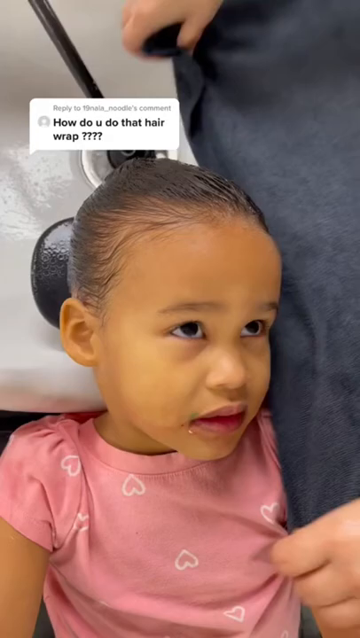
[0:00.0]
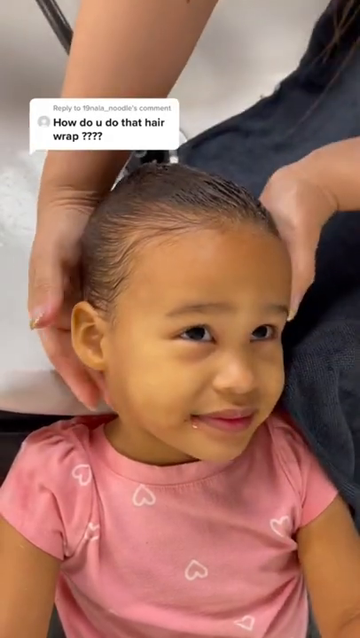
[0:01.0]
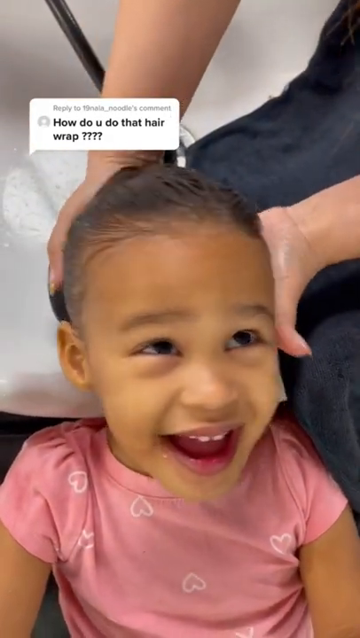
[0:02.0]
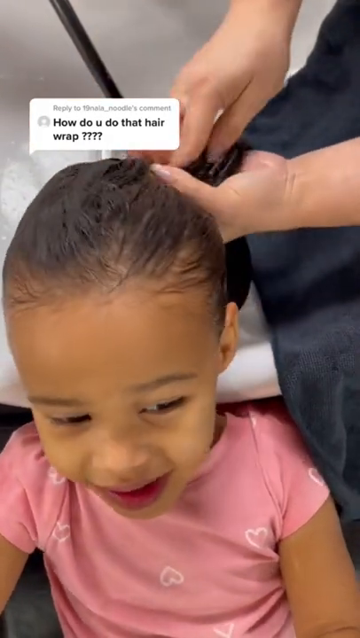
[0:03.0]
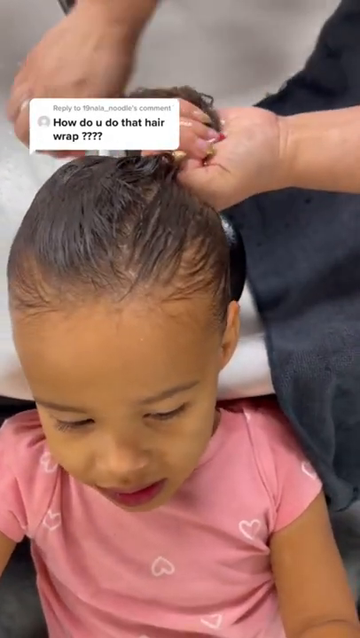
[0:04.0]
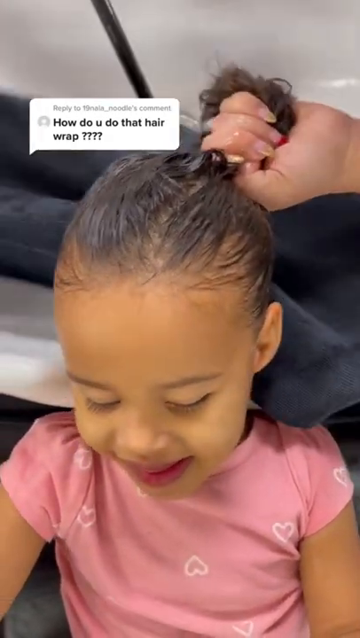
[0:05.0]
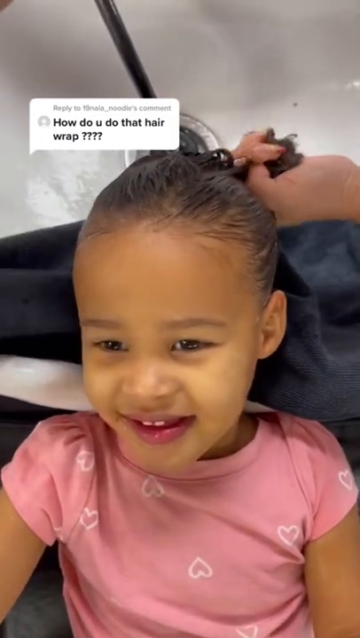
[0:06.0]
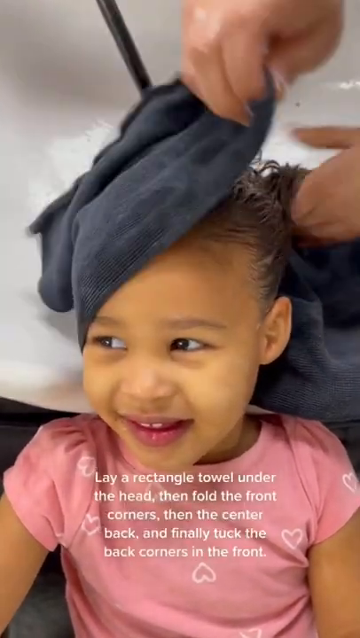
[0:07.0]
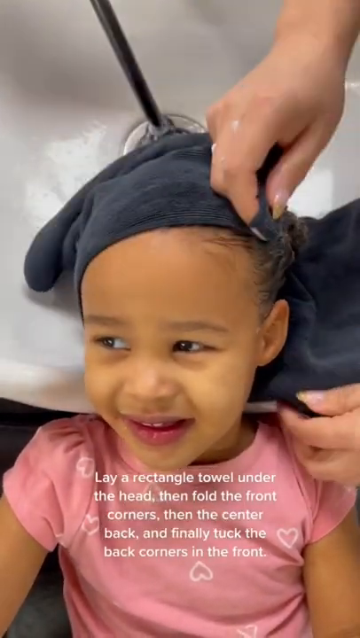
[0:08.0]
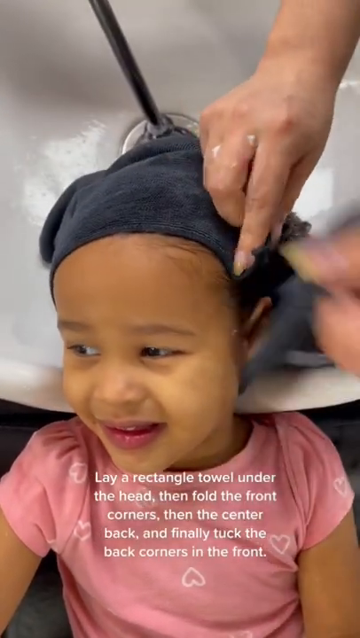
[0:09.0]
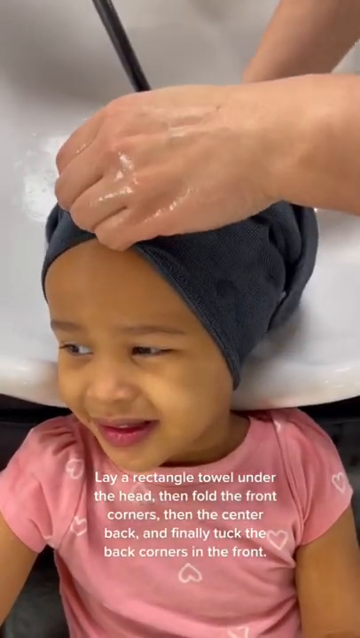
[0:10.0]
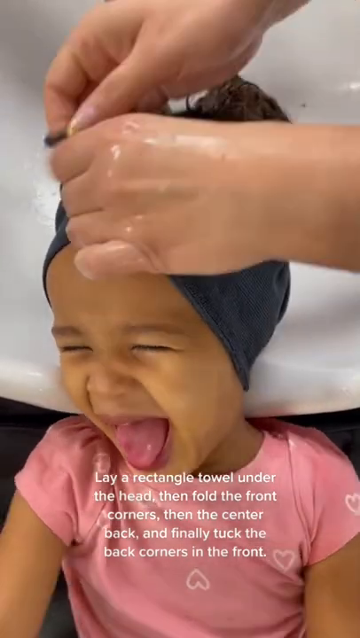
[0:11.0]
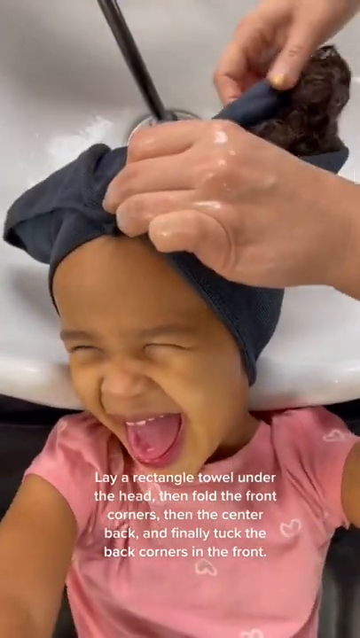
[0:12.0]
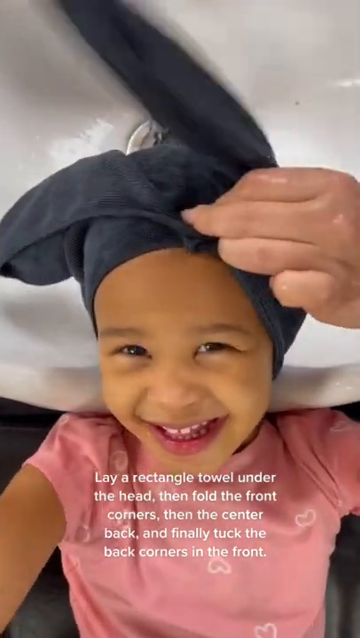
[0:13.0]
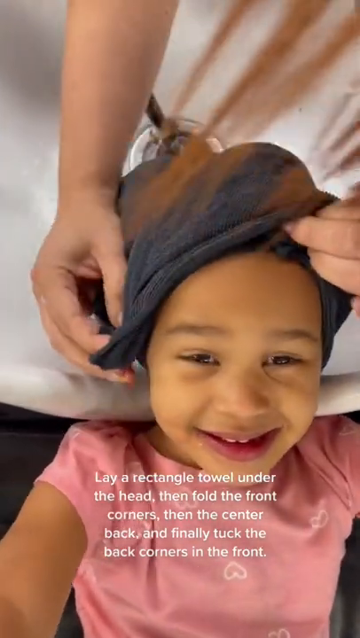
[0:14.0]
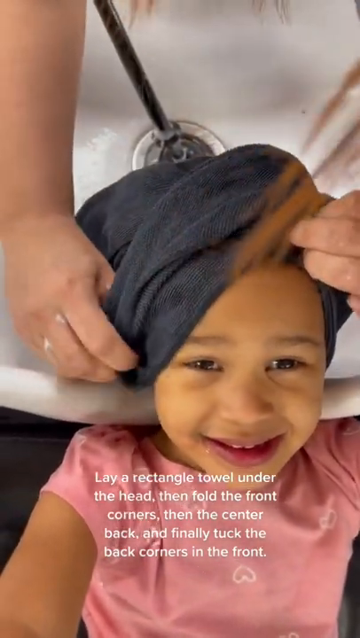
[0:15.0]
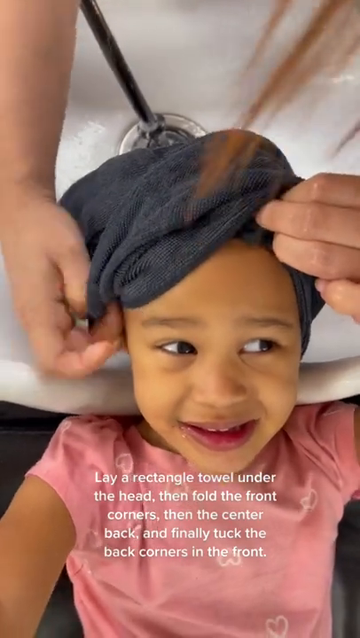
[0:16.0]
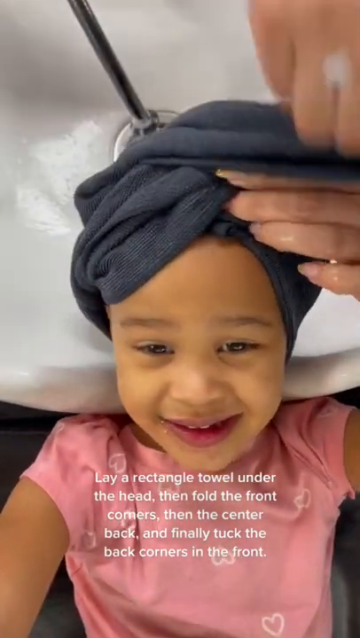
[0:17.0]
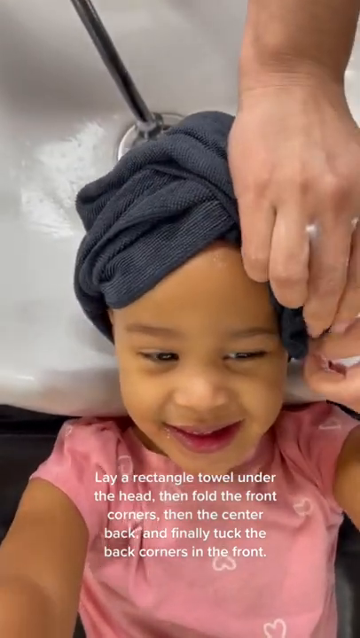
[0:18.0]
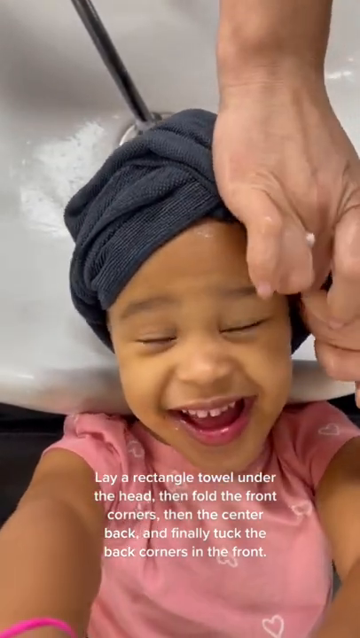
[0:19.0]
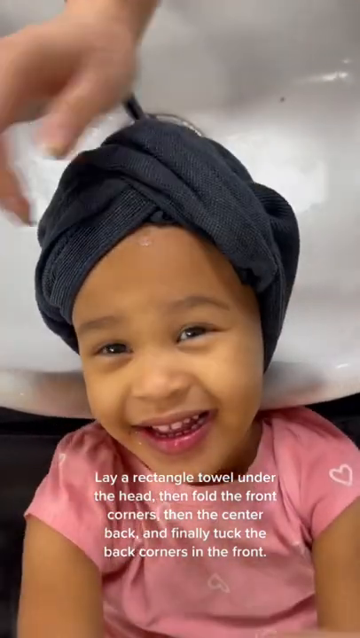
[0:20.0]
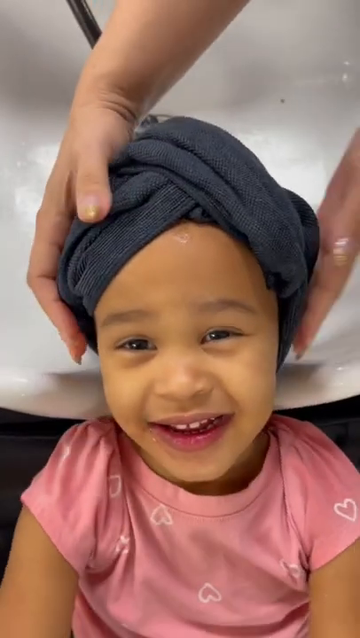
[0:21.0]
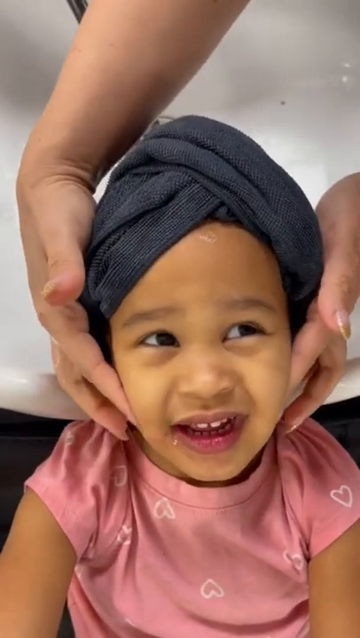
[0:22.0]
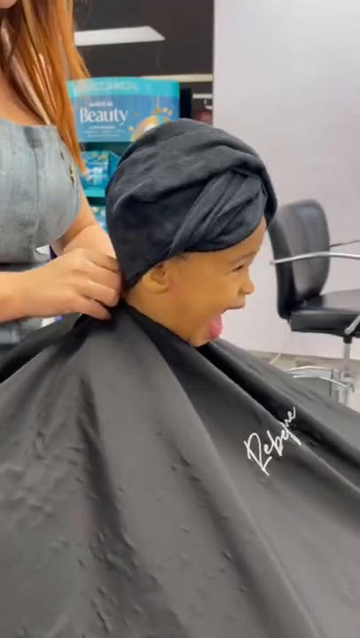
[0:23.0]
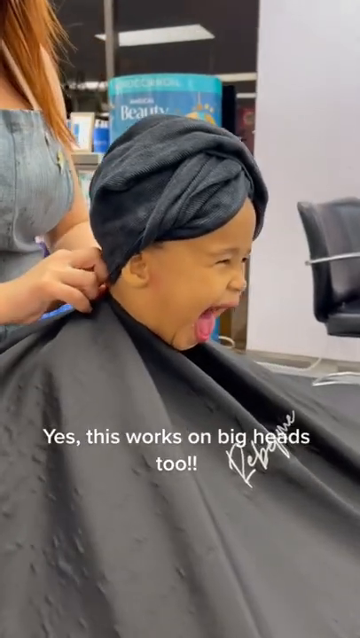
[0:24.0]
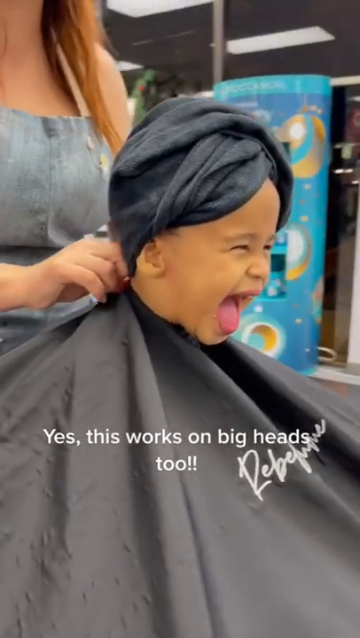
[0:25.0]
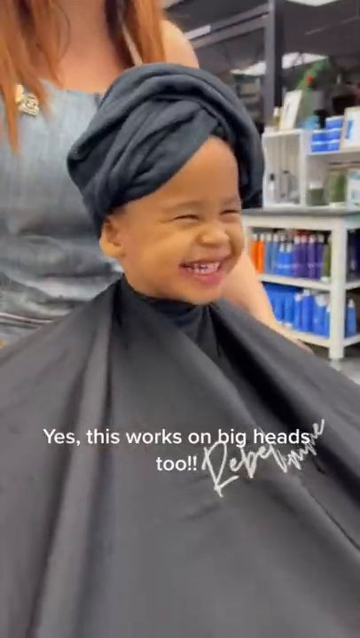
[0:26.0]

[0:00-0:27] A little girl, maybe three or four years old, is at a hair washing station. She looks like she may be mixed race, maybe black and white or black Hispanic and white. A woman has just finished rinsing her hair, and then a black towel is wrapped around her wet hair. The little girl laughs and makes funny little faces. She wears a pink short-sleeved shirt with little hearts on it. The beautician gently squeezes both of her cheeks. The video then shows the little girl sitting in a salon chair with a black cape wrapped around her. She laughs and giggles as she looks at herself in the mirror, and a person starts to take the hair wrap or towel off of her.